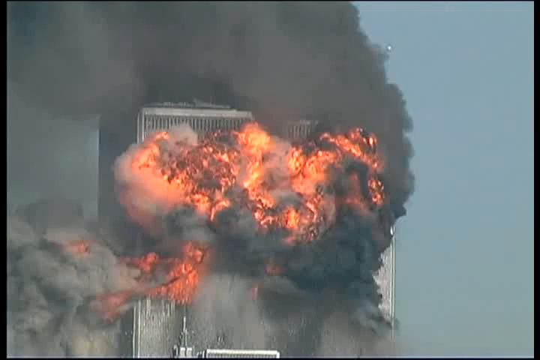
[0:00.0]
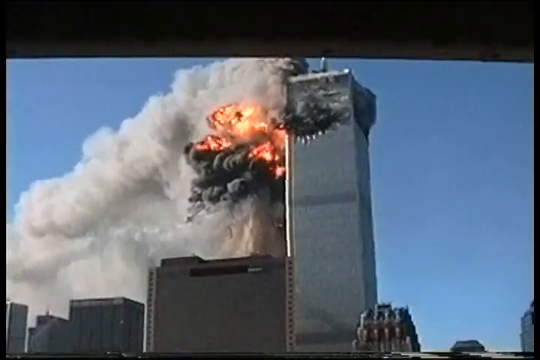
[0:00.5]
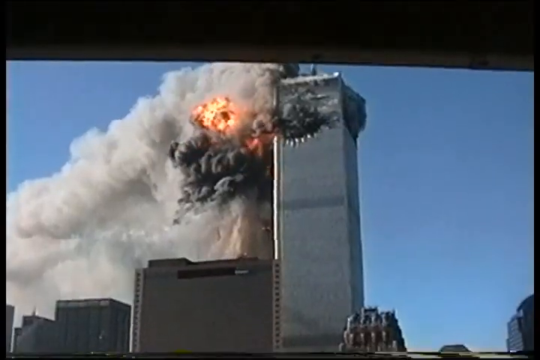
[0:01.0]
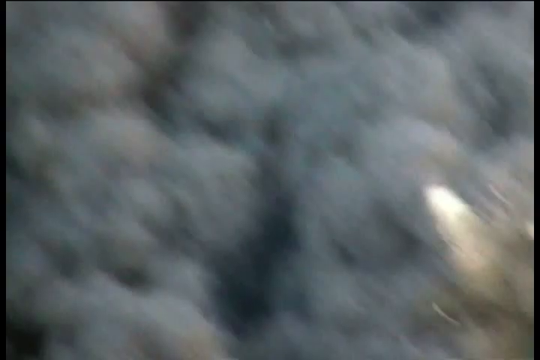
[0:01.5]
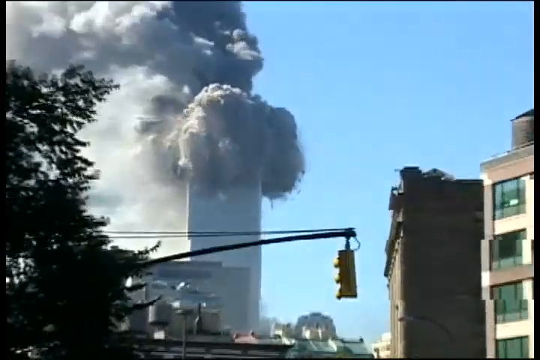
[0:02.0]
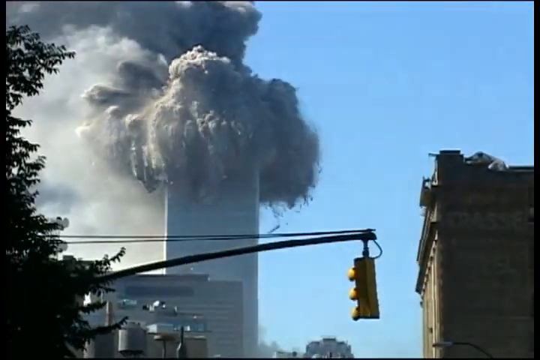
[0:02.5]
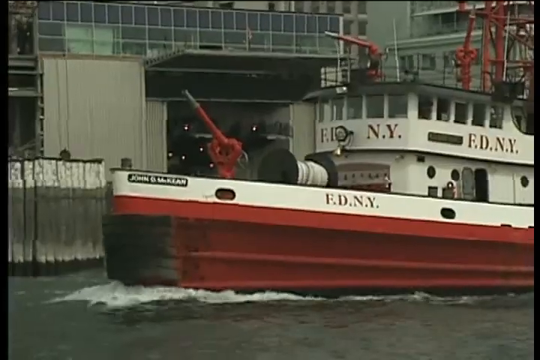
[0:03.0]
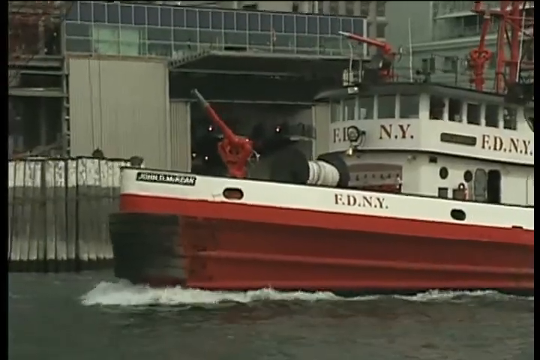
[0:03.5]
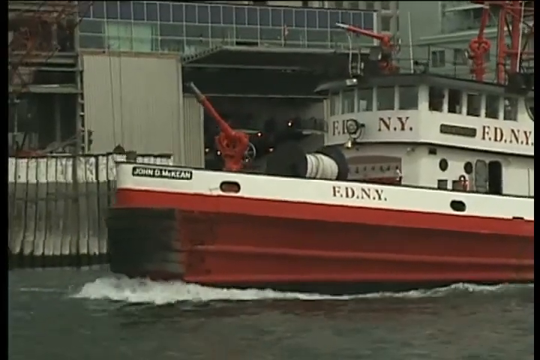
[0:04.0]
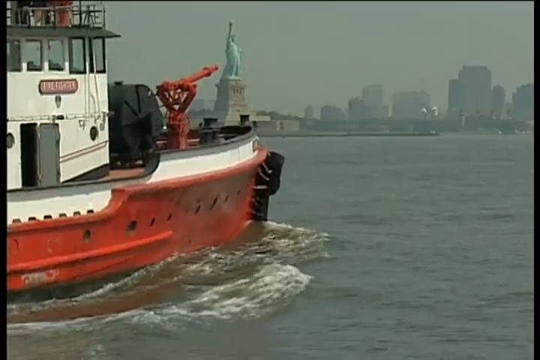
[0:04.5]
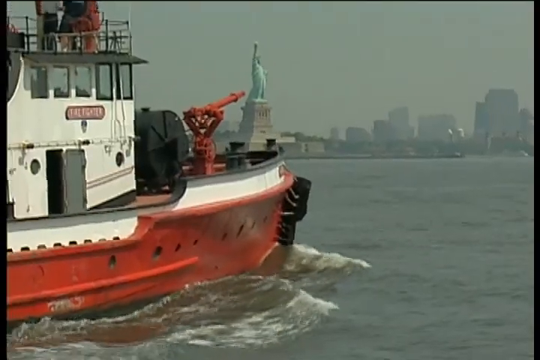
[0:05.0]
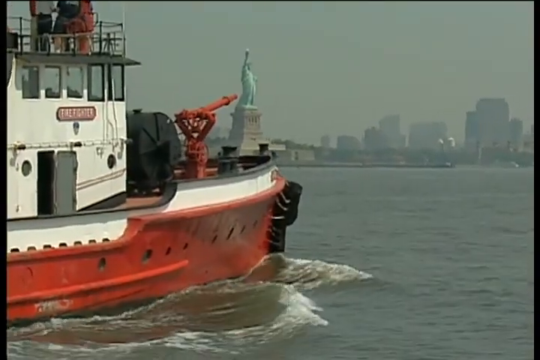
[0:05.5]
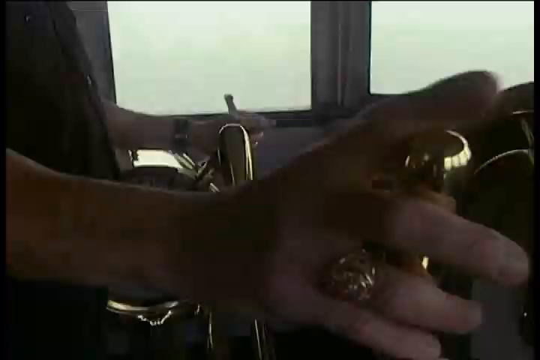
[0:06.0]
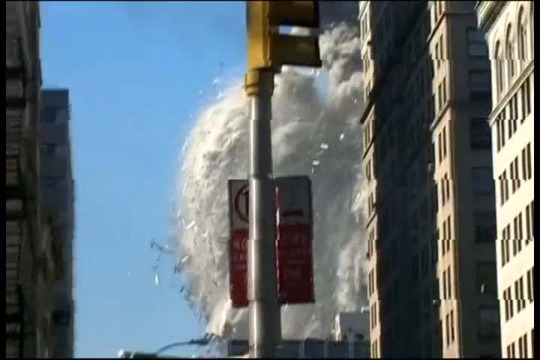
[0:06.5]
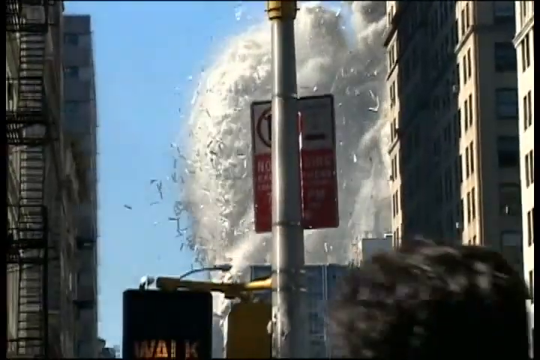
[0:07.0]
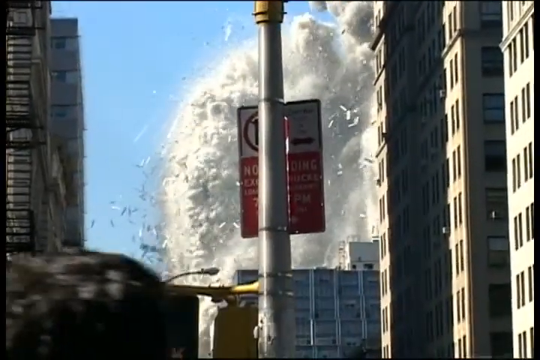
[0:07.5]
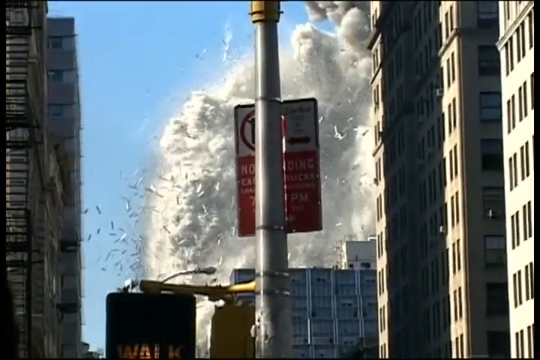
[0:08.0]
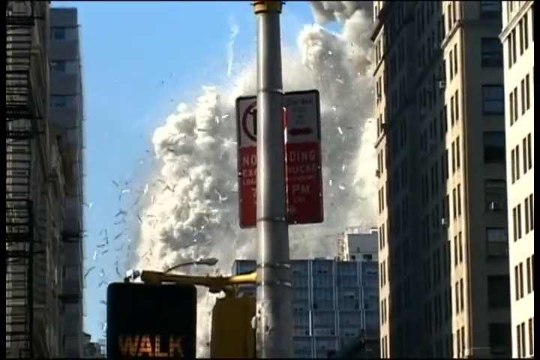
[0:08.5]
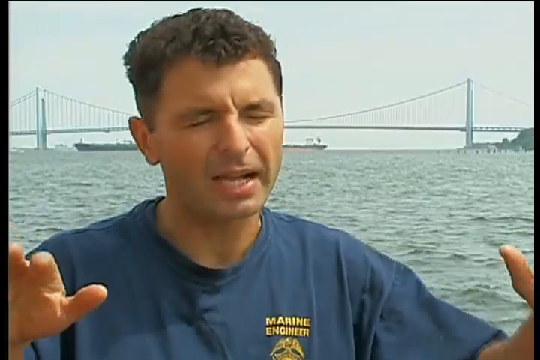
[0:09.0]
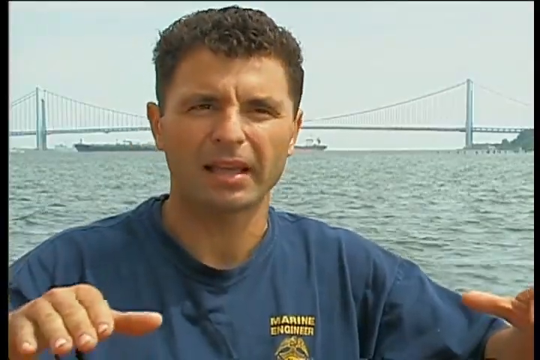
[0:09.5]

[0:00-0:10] The video opens on the Twin Towers on fire during the 9-11 attack. The view zooms out and one of the towers collapses. Next, a boat moves to the left; it looks like a tugboat or a fireboat, with a red bottom and a white top. Firemen are shown, followed by another image of the towers collapsing, with what appears to be a street pole in front of the camera bearing a red and white sign. A man in a blue shirt then faces the camera and talks, raising his hands and putting them down in a wave-like motion.